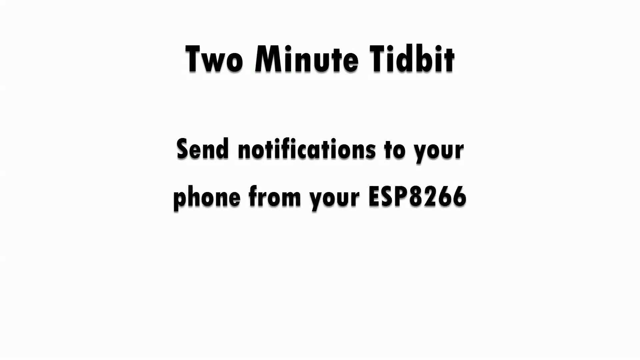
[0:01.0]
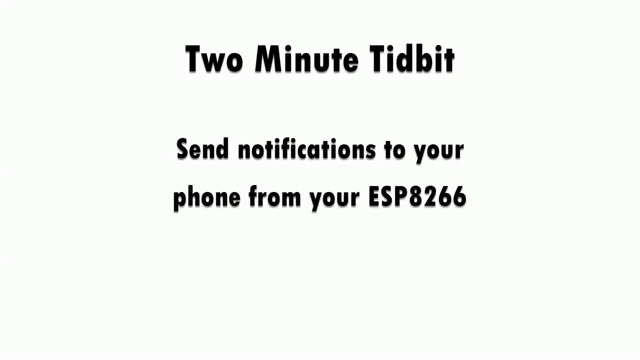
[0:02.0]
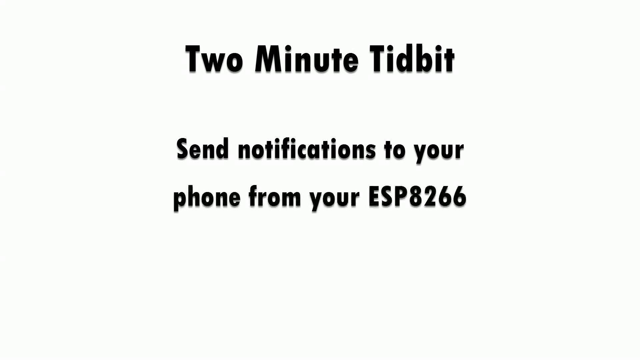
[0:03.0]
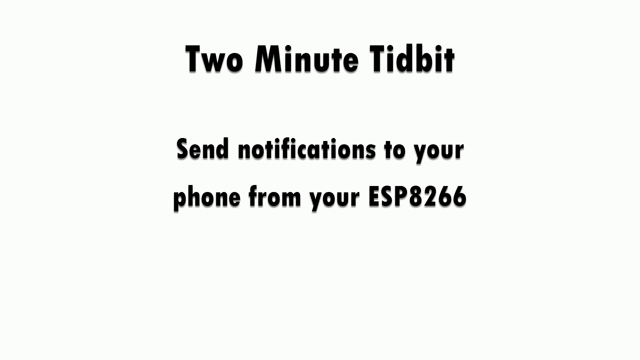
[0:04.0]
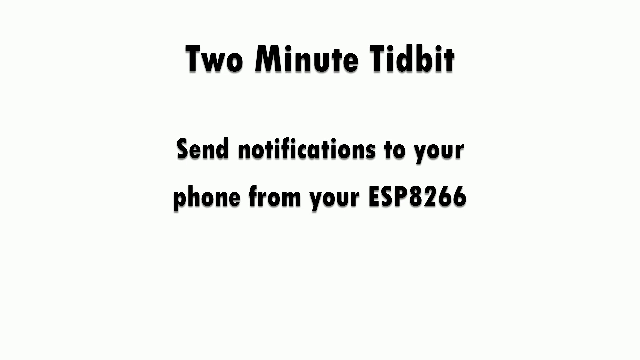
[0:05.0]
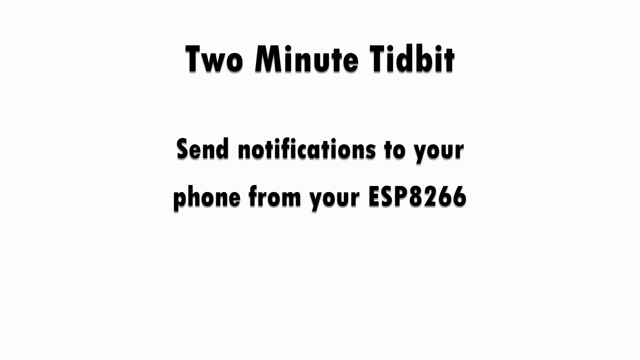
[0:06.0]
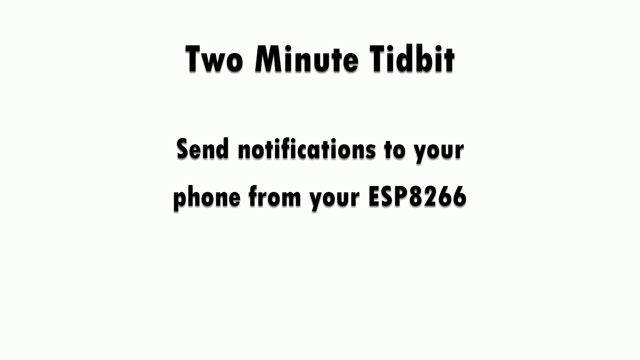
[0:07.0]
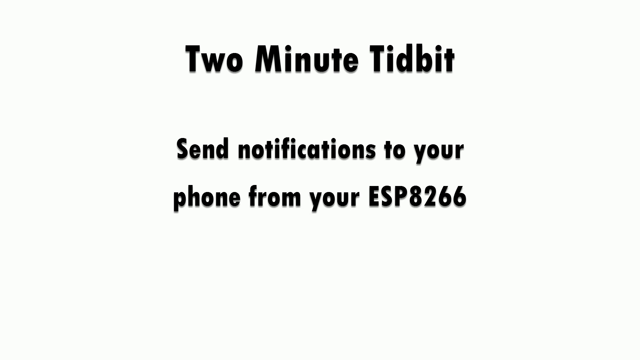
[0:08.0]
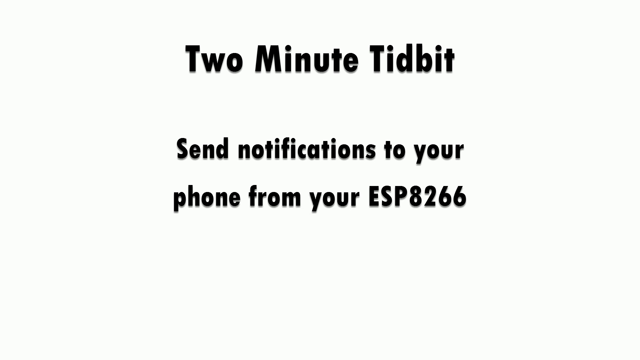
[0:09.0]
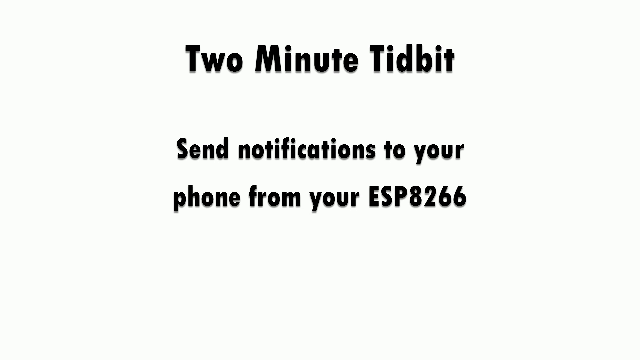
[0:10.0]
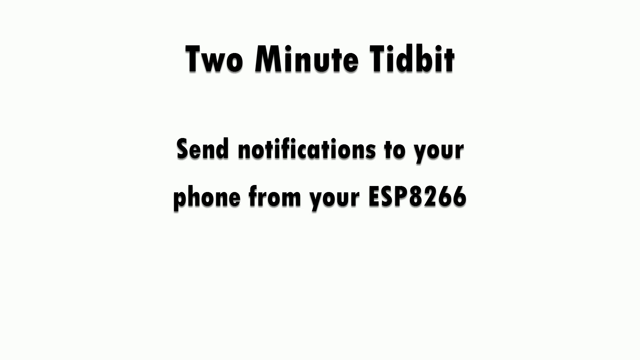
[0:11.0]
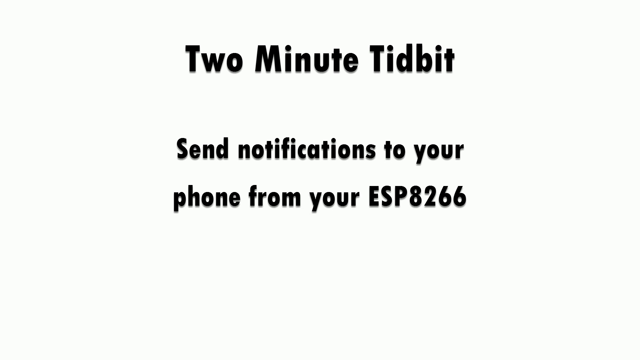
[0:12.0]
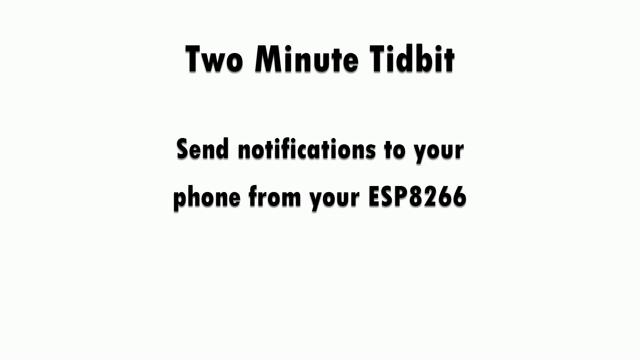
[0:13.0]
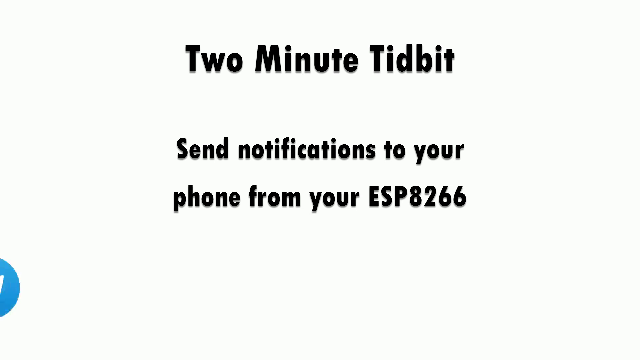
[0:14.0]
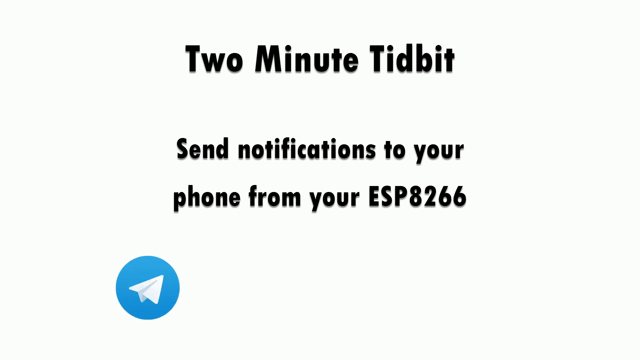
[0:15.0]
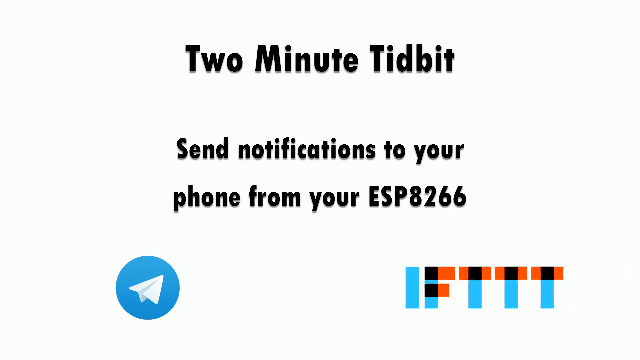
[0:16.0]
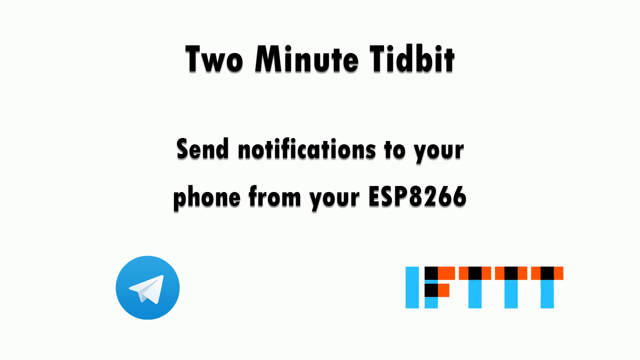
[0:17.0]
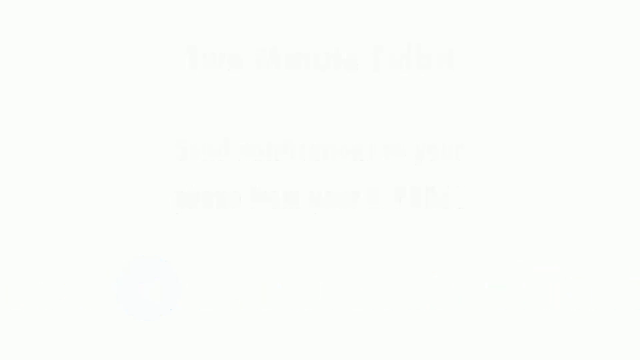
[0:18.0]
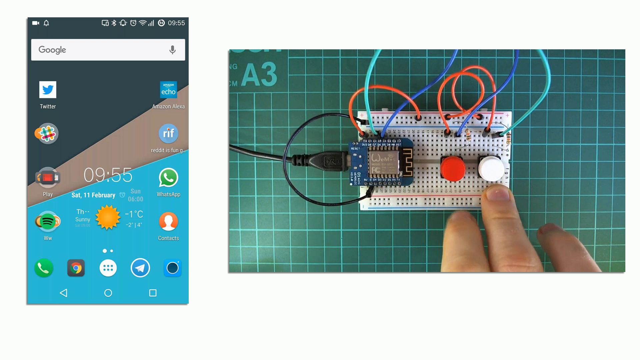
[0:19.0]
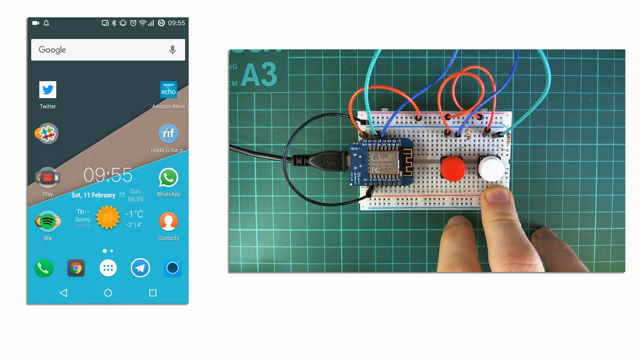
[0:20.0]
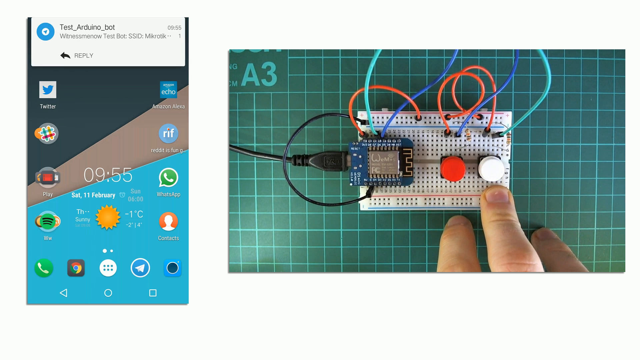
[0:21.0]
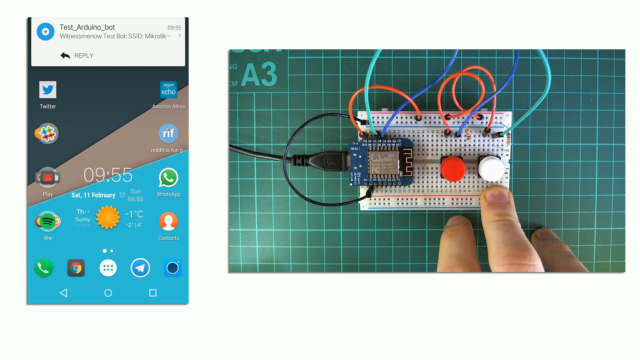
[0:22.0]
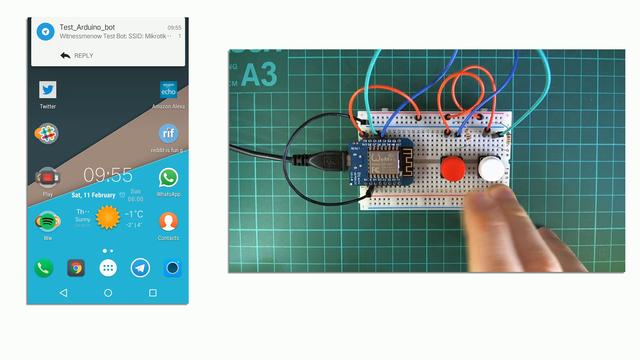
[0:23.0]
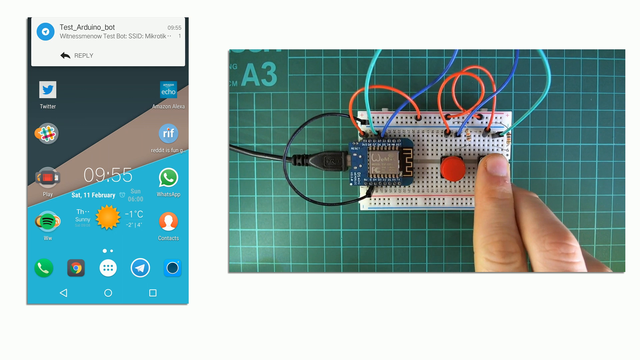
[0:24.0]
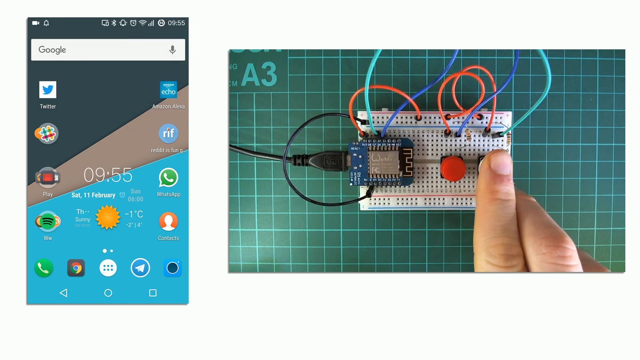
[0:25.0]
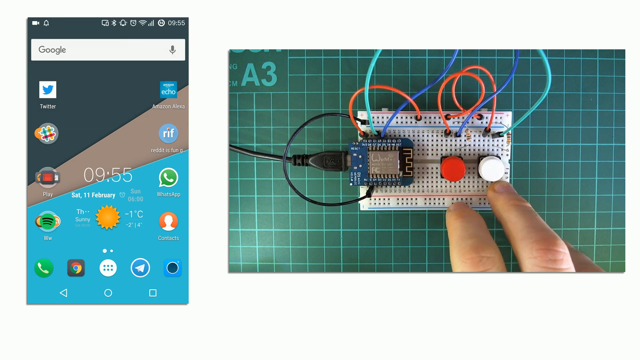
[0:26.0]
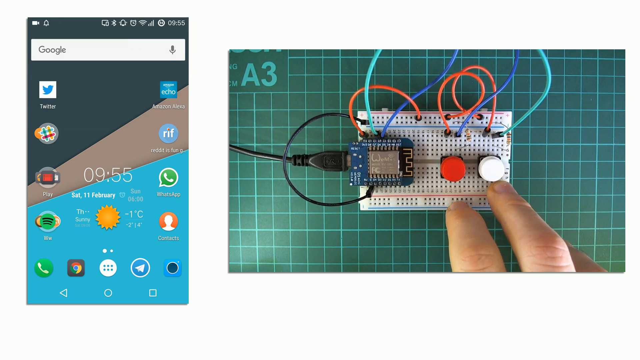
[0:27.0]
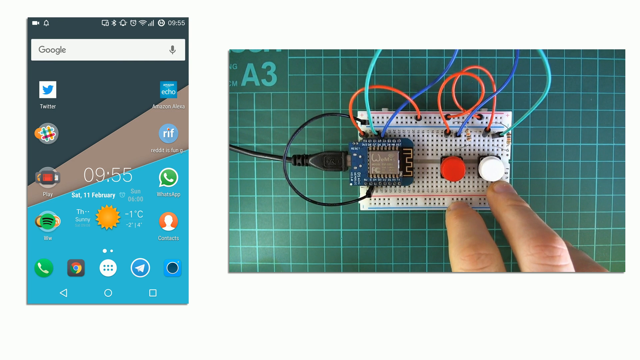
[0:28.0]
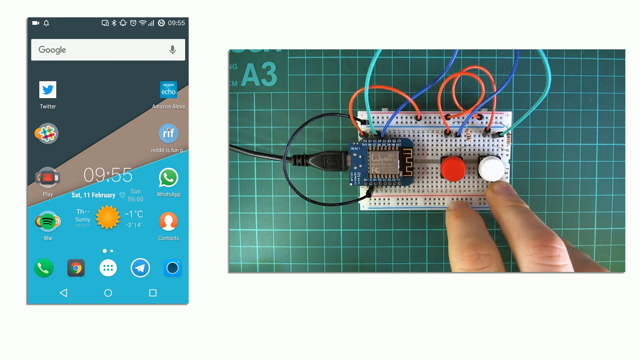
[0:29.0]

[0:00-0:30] A screen reads "two-minute tidbits send notifications to your phone from your ESP8266." An icon then appears: a blue circle with something like a paper airplane on it. Next come the letters "IFTTT" in blue, with orange and black on the F and the top of the T in orange and black. A screen then shows what looks like a phone, of an unclear type. After that, some type of device appears with a USB plugged into it, seemingly to power it on; it looks like a very big microchip, possibly. It has only two buttons, one red and one white, and a little chip connected to the USB that seems to power it on. The person clicks the white button, and it makes a phone do something.